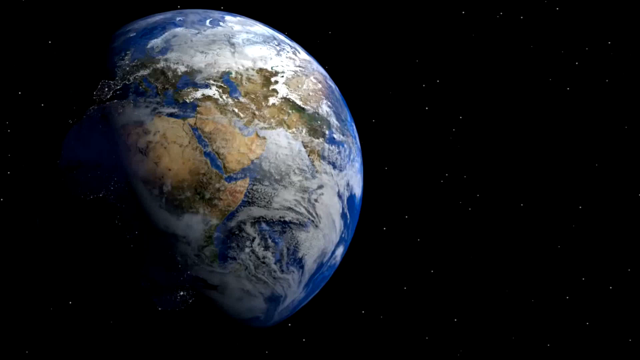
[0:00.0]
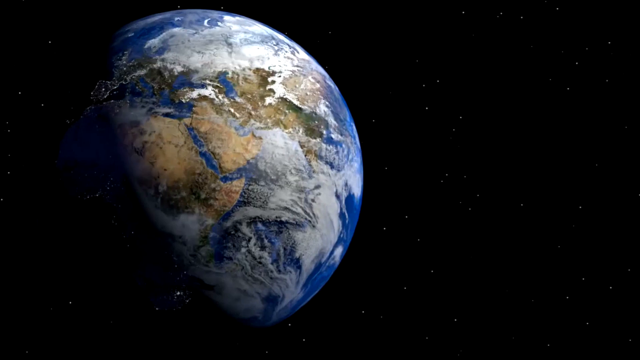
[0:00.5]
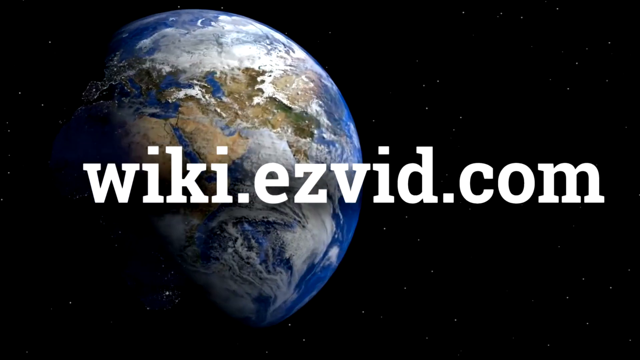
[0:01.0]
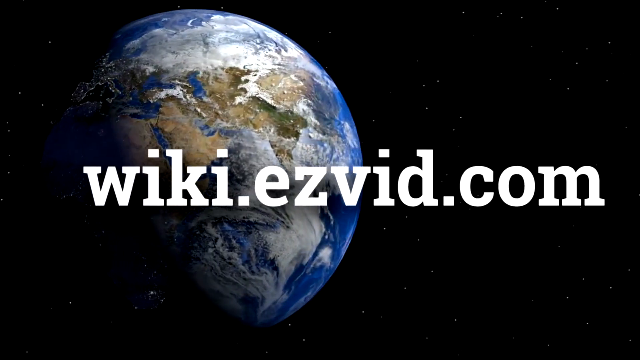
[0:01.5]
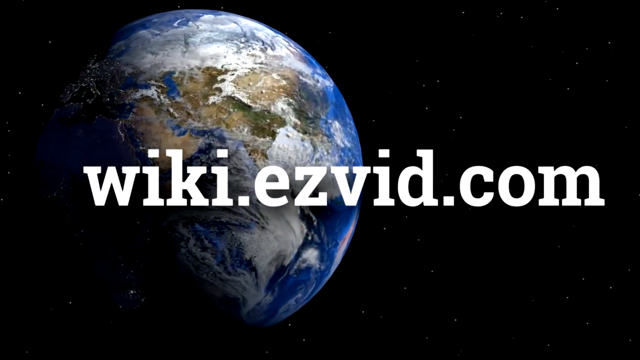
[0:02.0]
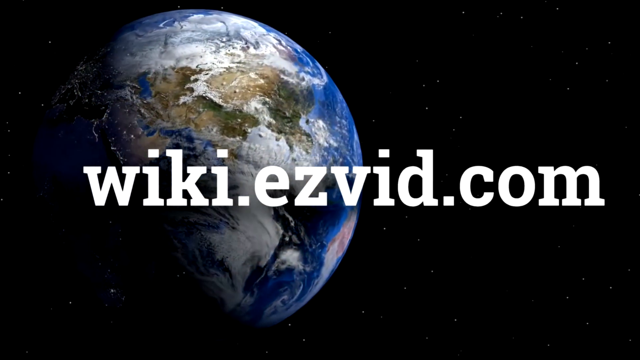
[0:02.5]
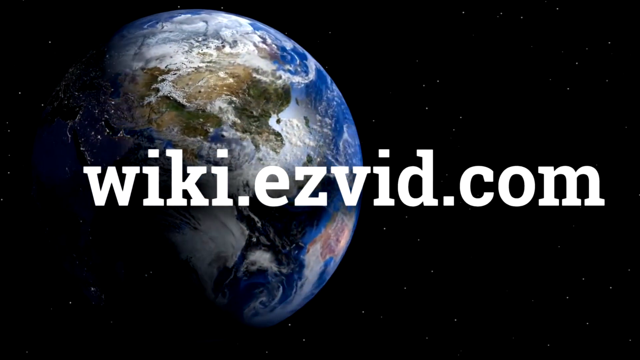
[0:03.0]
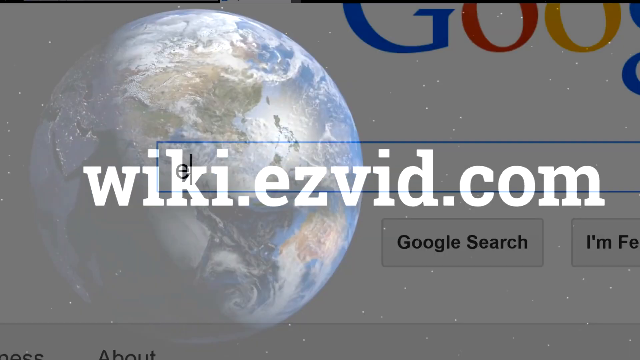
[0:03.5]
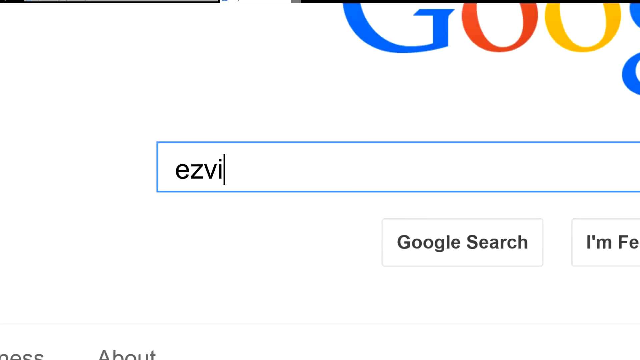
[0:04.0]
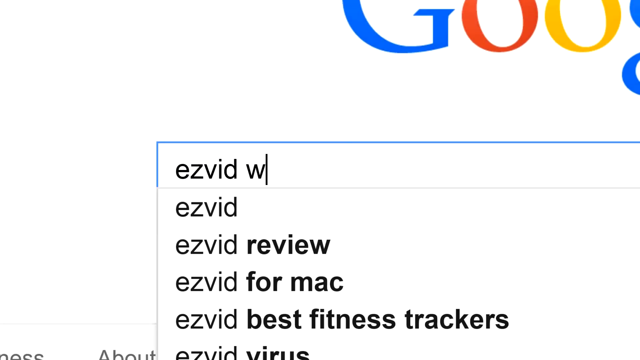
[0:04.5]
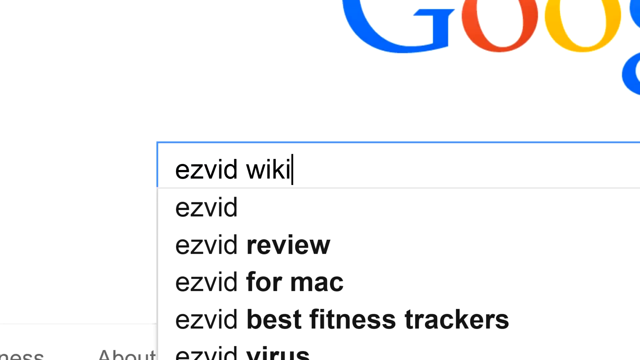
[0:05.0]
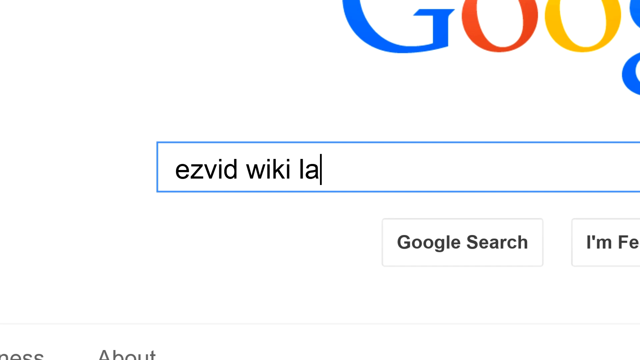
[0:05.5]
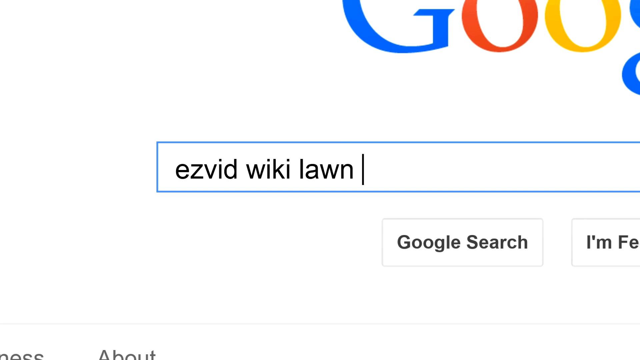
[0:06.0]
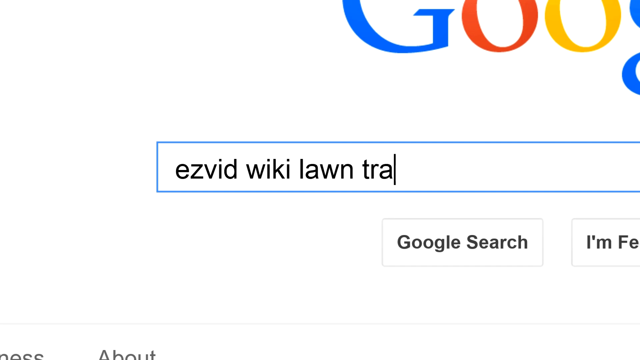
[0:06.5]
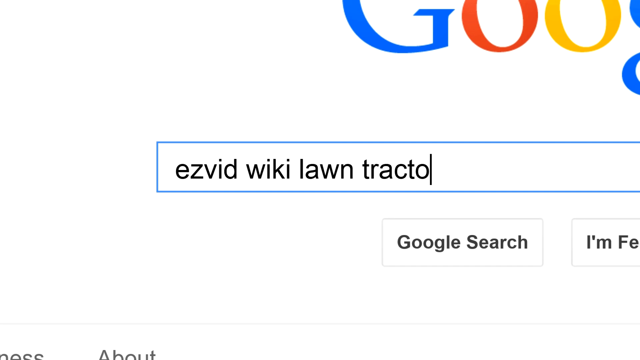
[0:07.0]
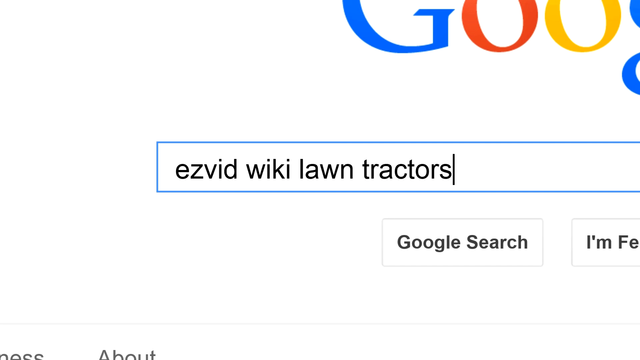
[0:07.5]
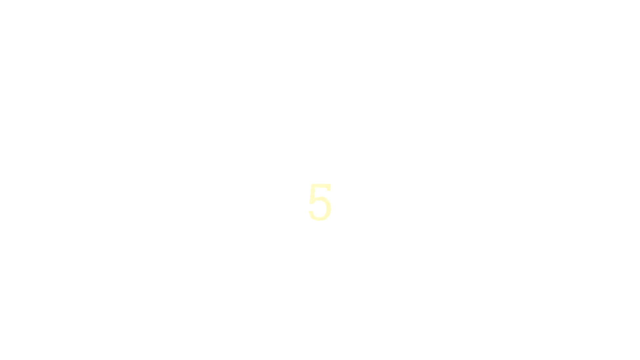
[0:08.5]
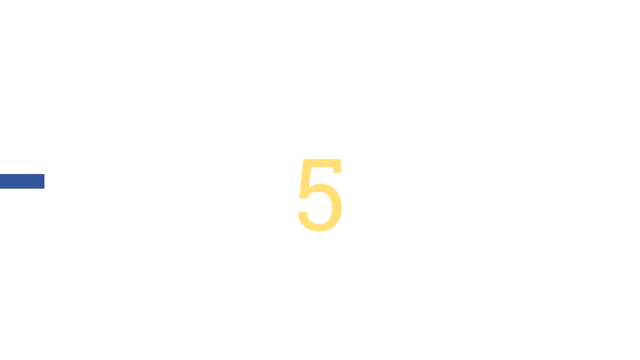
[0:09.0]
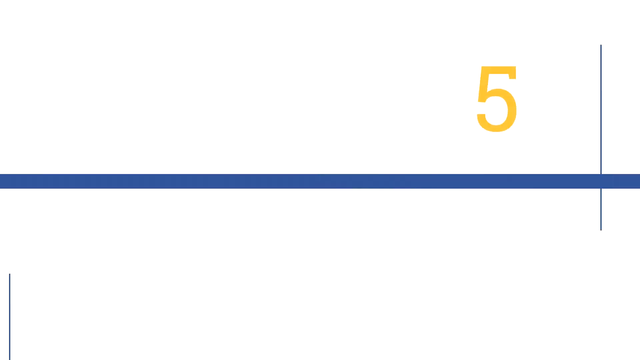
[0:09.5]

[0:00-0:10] A rotating earth appears on the left of a black screen, turning clockwise and showing different geography in blue, white, and green. White lettering quickly fades down, revealing "wiki.ezvid.com" in white text, while the earth keeps rotating against the black background. The scene then fades to an image of a Google search. The Google logo, with green, red, yellow, and blue letters, is on the top right. Below it is a button that says "Google Search" and another button that is cut off, reading "I'm F E" before the rest is cut off. "ezvid wiki lawn tractors" is typed into the search bar as the cursor moves from left to right. The page then turns completely blank white, and a floating yellow 5 appears in the center of the screen. It floats up to the top right corner as a blue line stretches across the screen.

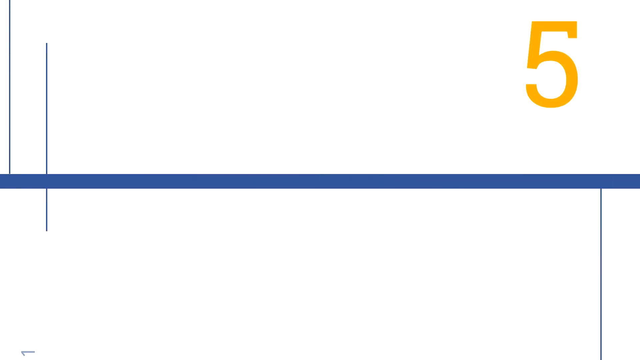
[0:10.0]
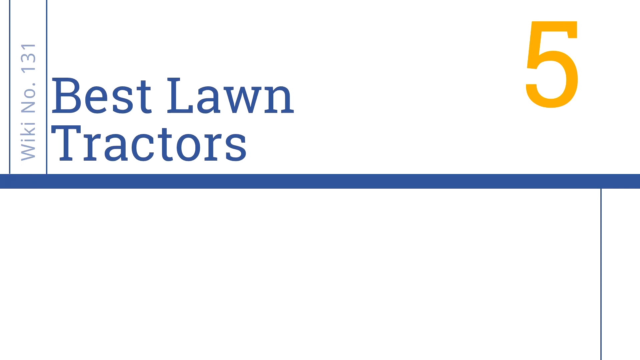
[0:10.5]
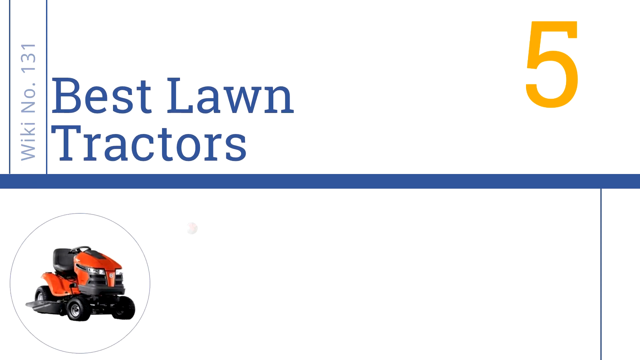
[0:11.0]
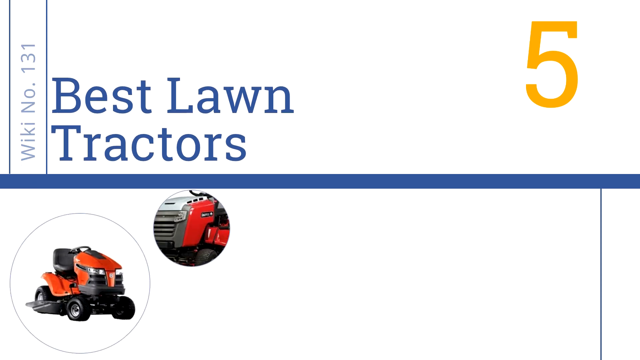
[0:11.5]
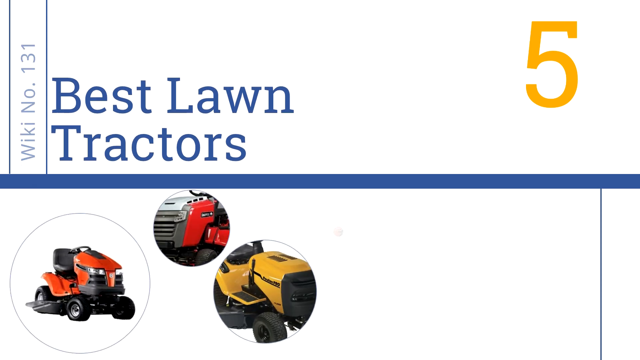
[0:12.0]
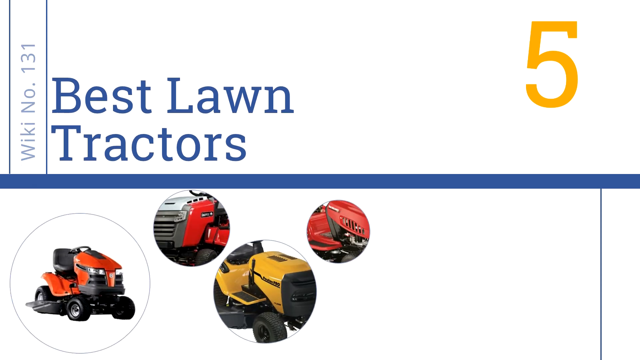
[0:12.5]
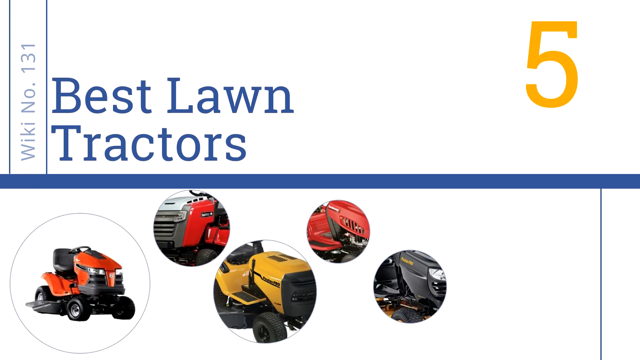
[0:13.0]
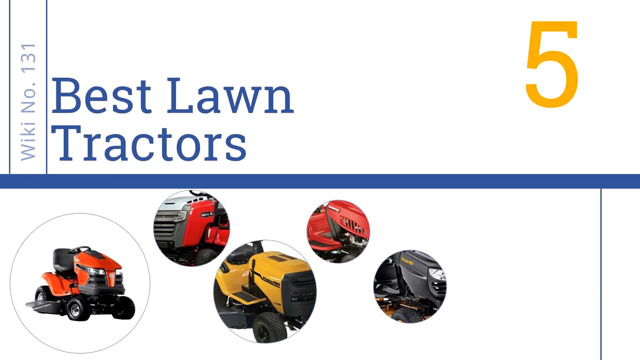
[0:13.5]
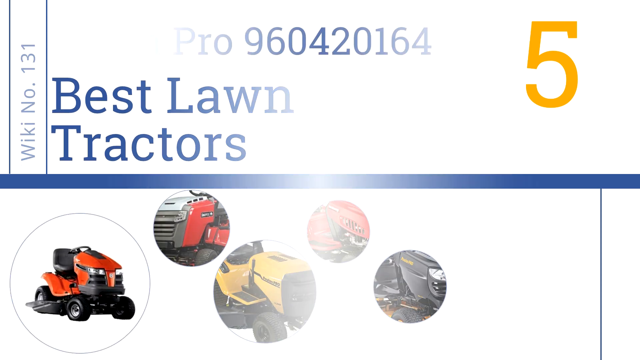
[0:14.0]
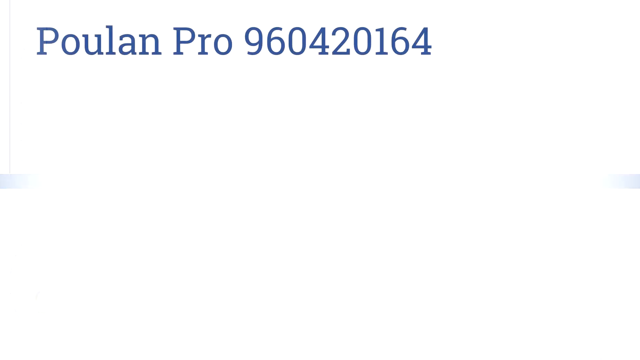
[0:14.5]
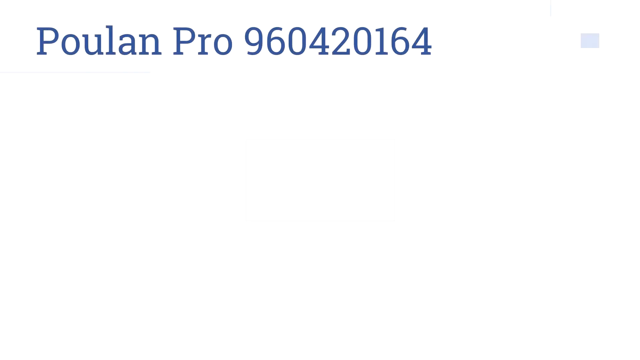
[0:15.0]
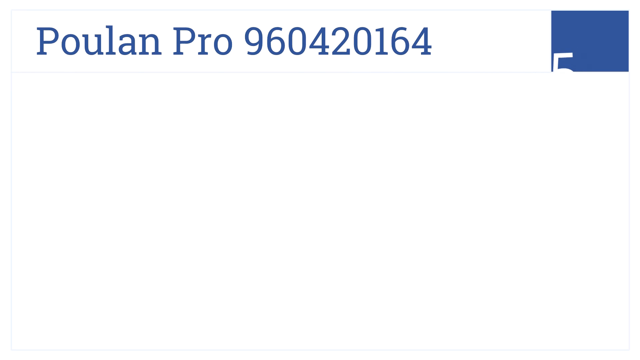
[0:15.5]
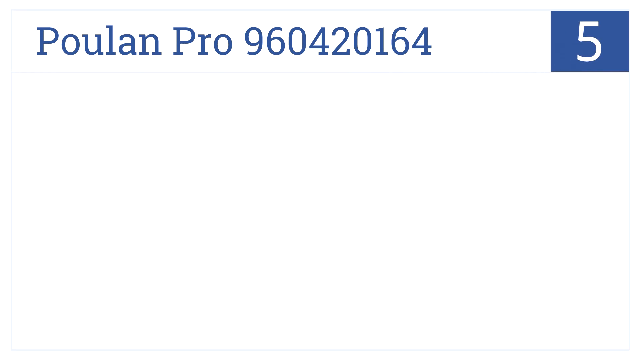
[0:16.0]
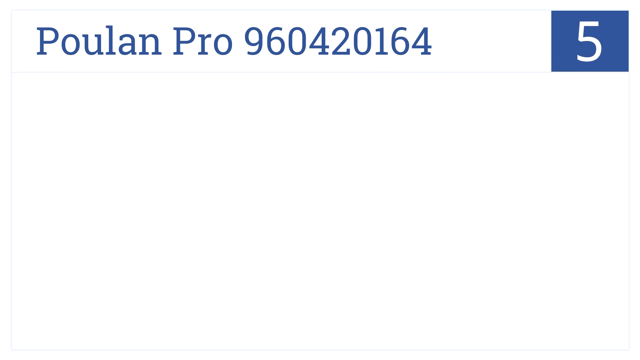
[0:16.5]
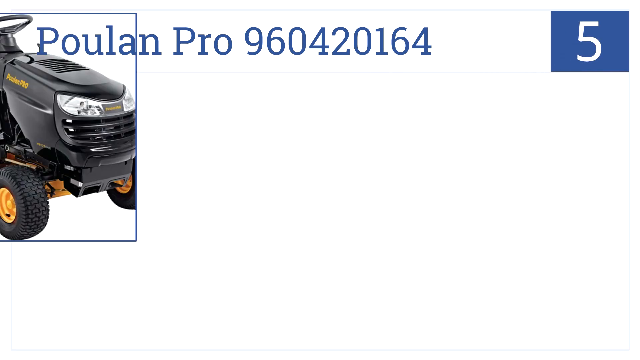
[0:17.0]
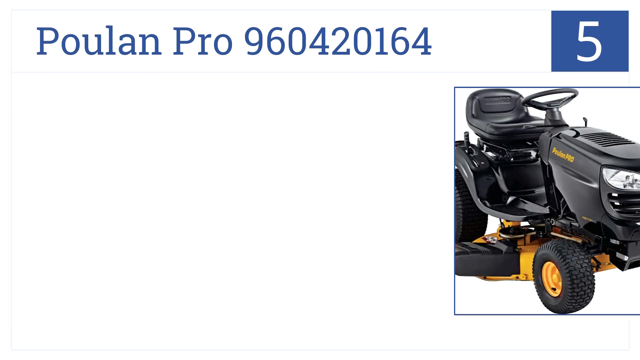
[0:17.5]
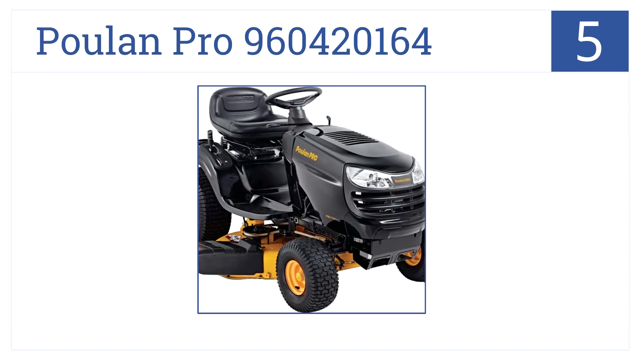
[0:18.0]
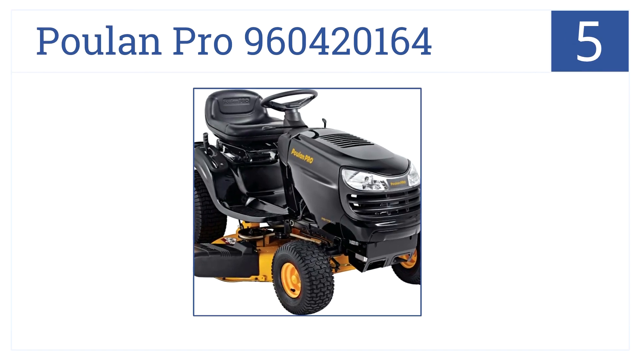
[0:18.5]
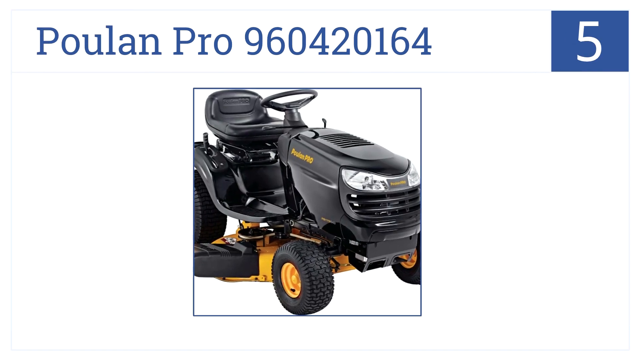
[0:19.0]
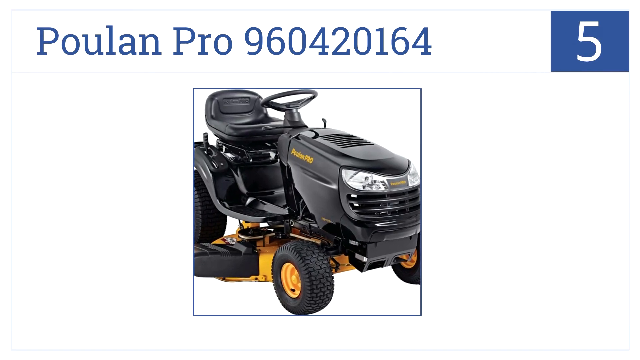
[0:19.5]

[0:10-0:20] The yellow 5 remains on the top right of the screen, with the blue ribbon stretching across the middle. Text arrives on the left side reading "Best Lawn Tractors." On the bottom left, an image of a red tractor appears in a bubble, and more images of tractors appear beside it, including a red and yellow one, along with images of specific tractor parts. A fading transition begins, and new blue text arrives at the top of the screen reading "Pulon Pro," with numbers falling behind it. A blue 5 appears on the top right, and a new image of a black tractor swipes from the top down into the middle of the screen.